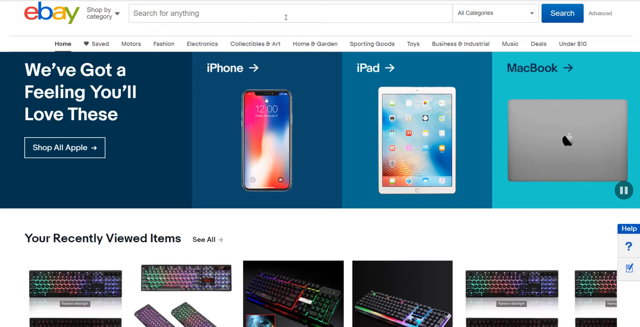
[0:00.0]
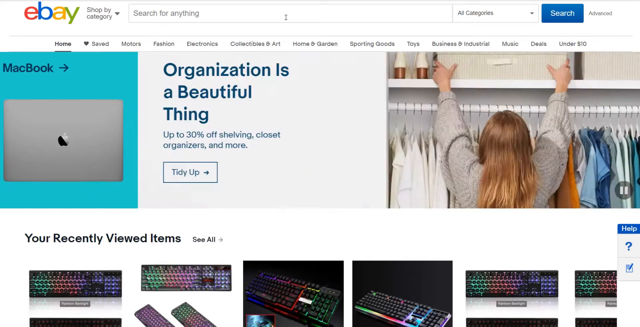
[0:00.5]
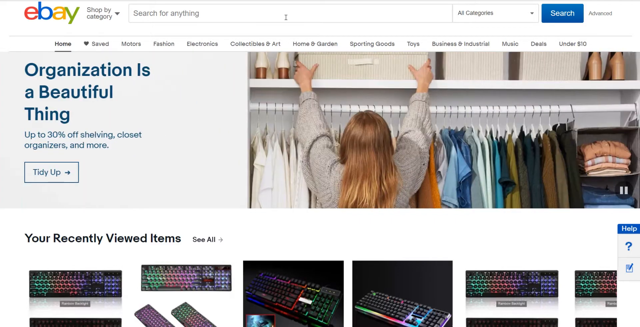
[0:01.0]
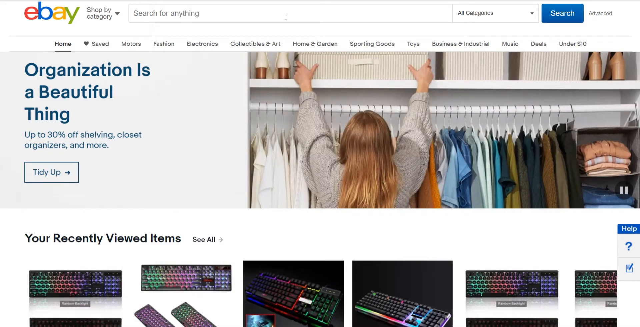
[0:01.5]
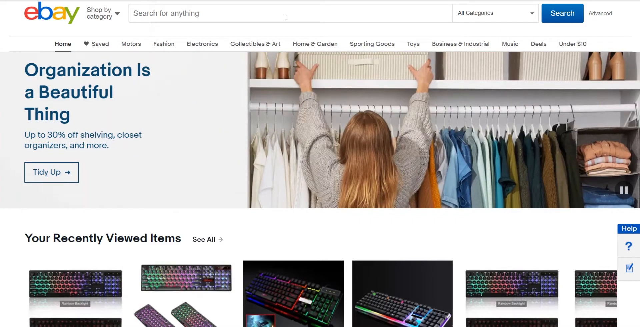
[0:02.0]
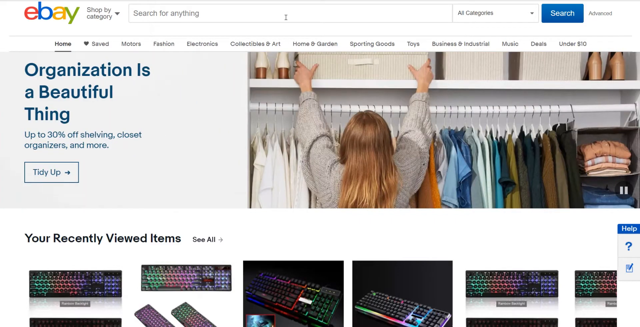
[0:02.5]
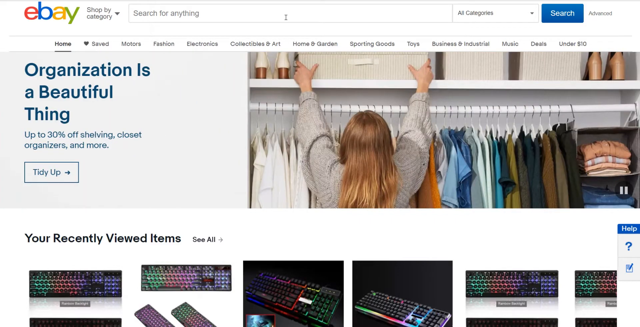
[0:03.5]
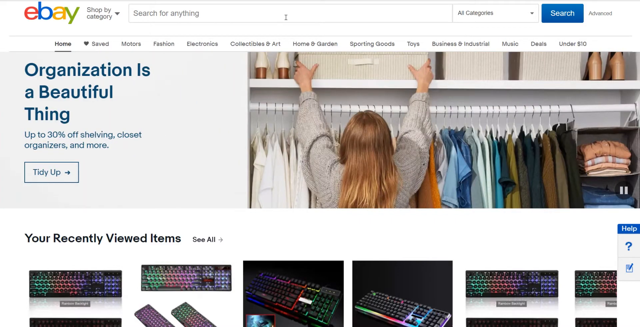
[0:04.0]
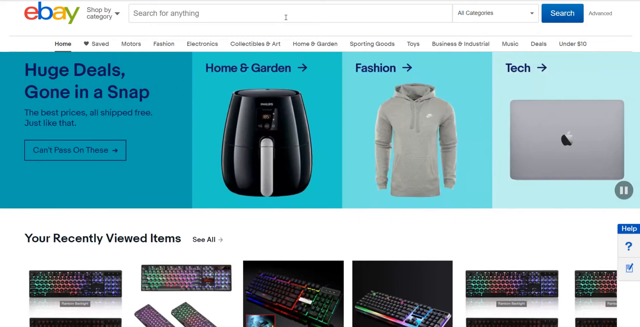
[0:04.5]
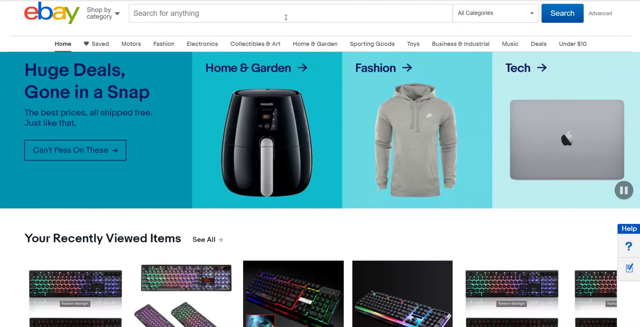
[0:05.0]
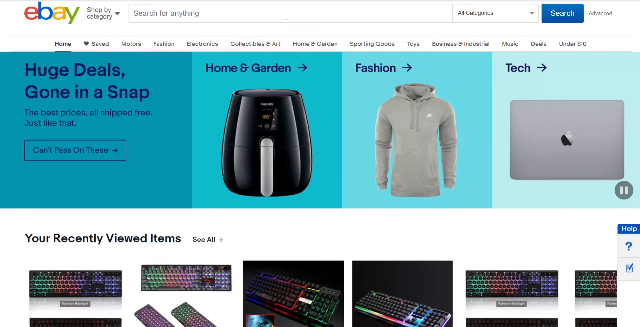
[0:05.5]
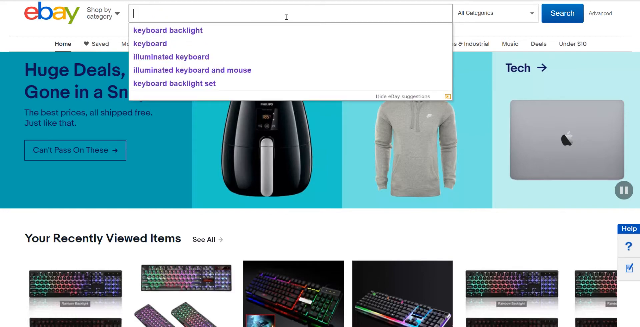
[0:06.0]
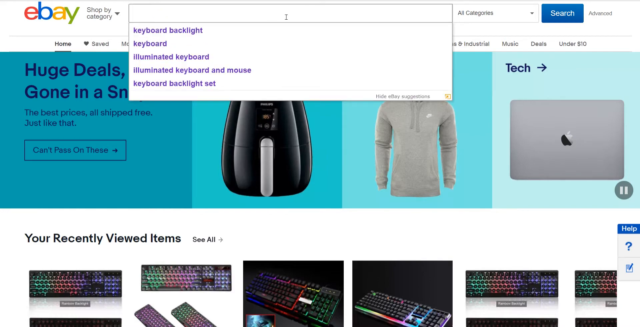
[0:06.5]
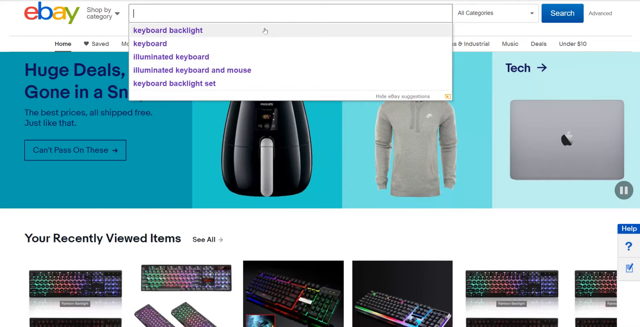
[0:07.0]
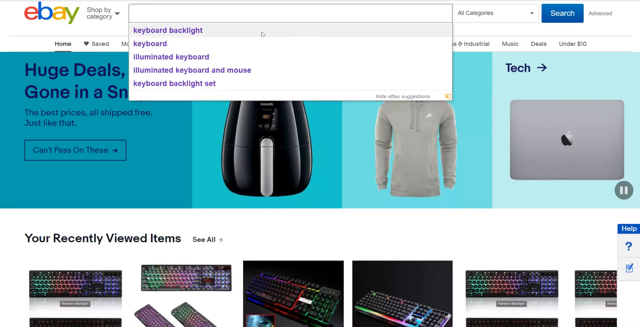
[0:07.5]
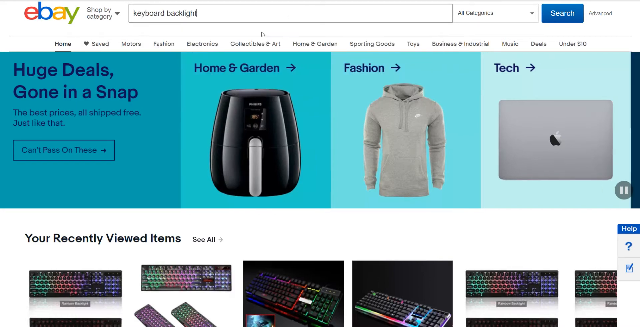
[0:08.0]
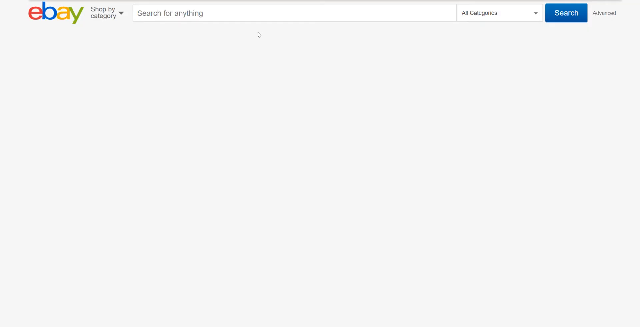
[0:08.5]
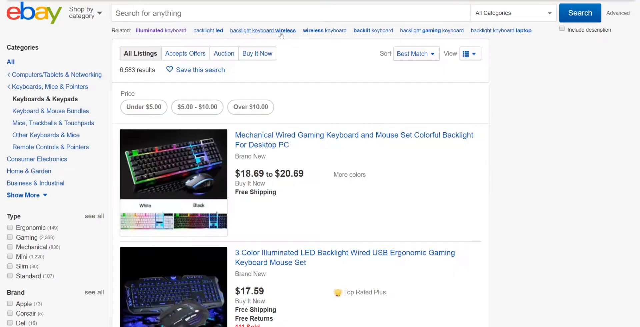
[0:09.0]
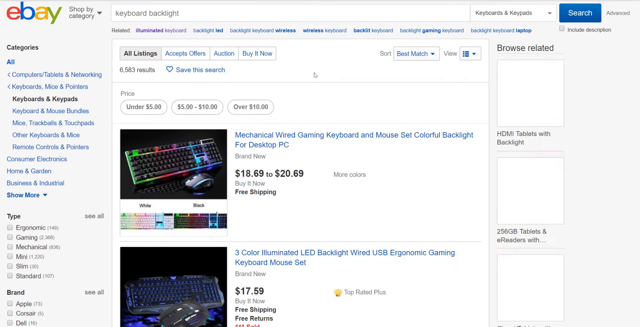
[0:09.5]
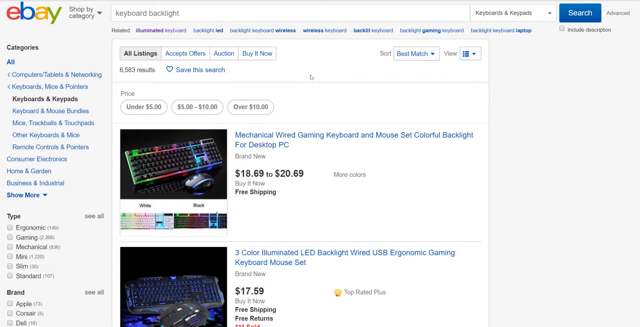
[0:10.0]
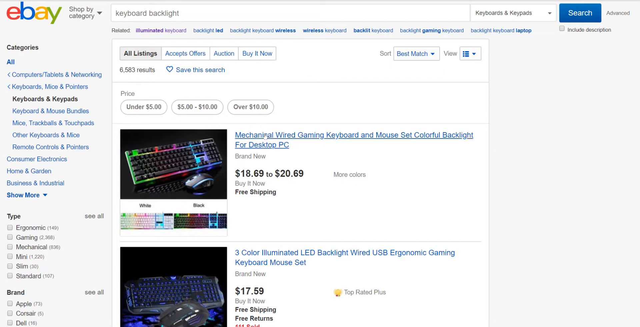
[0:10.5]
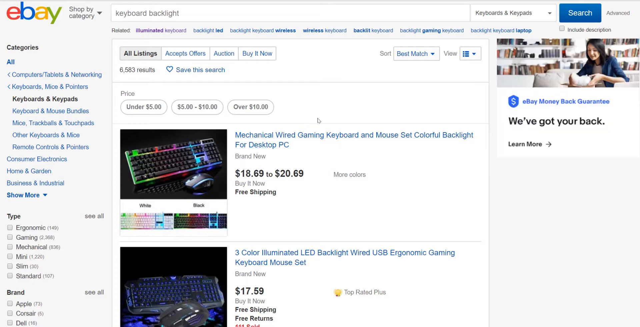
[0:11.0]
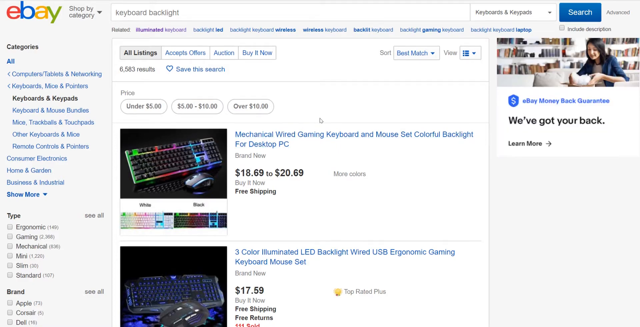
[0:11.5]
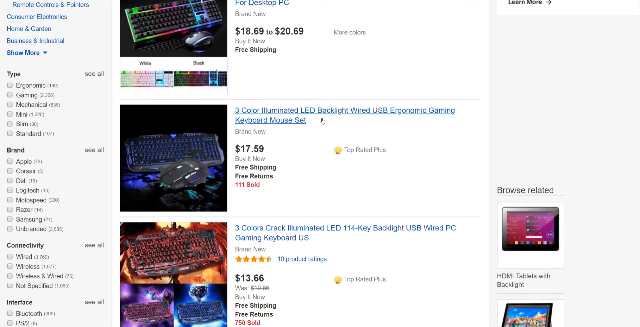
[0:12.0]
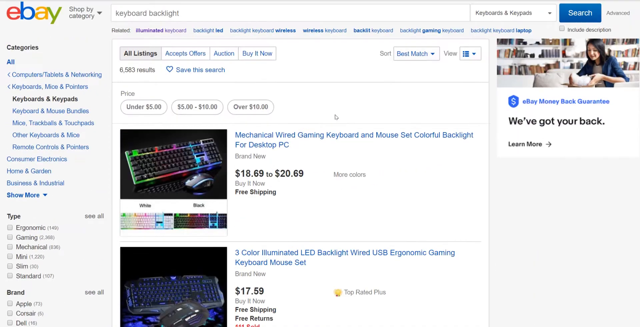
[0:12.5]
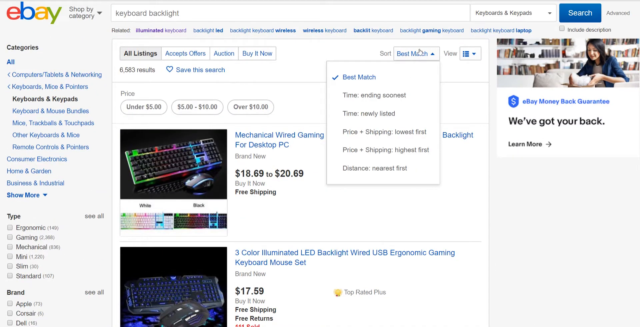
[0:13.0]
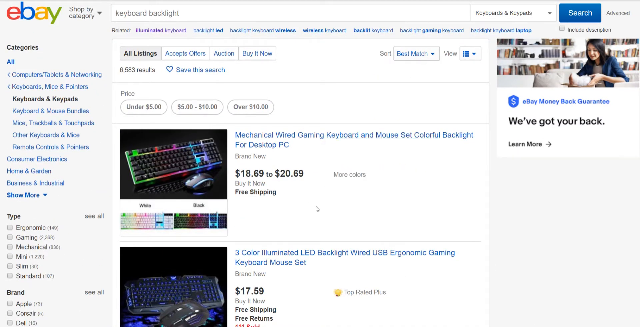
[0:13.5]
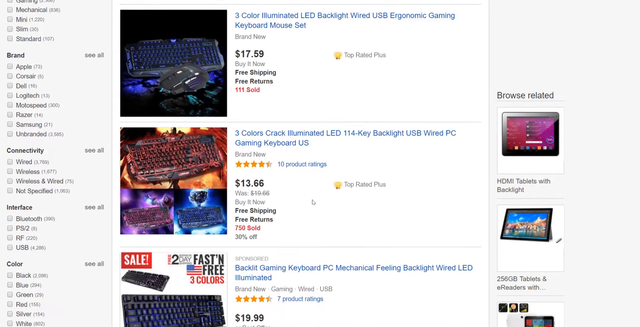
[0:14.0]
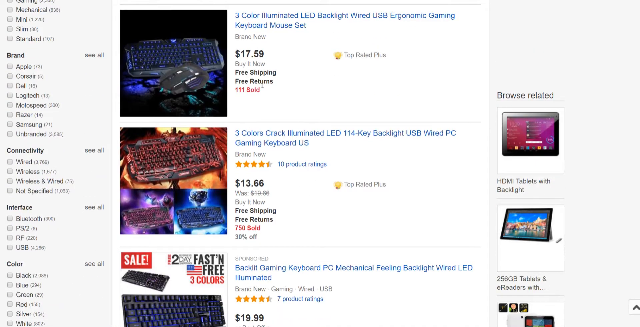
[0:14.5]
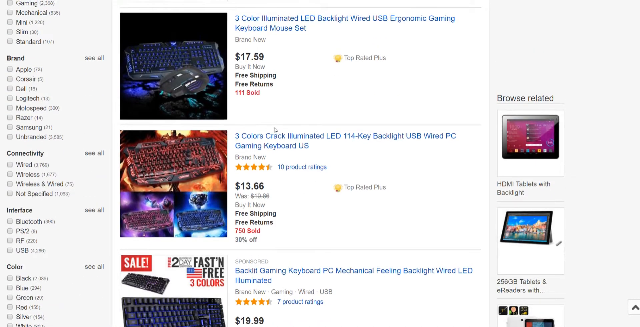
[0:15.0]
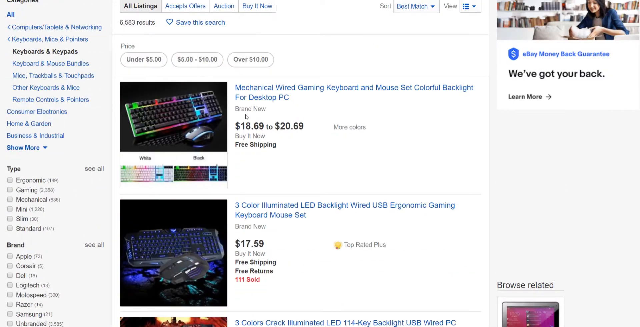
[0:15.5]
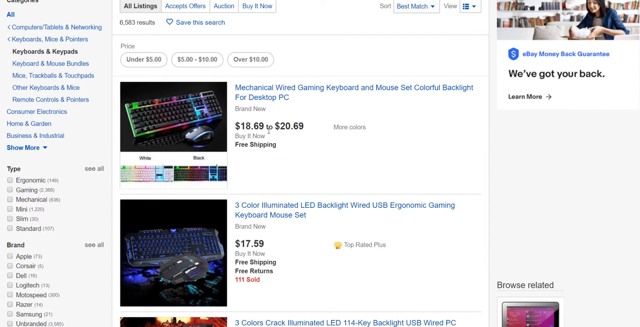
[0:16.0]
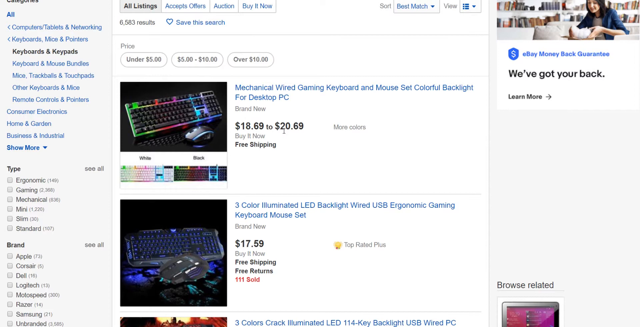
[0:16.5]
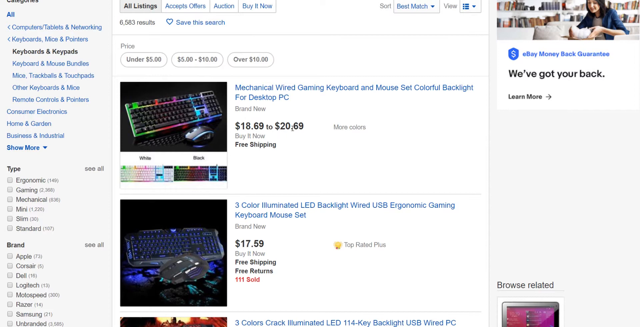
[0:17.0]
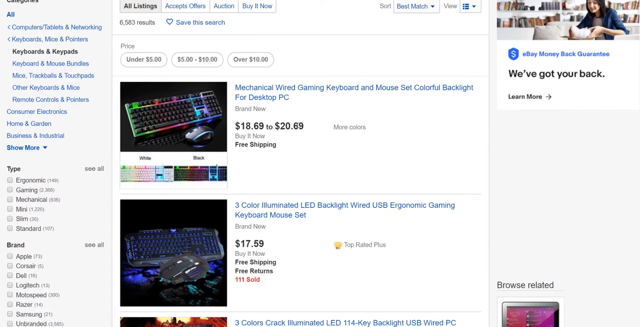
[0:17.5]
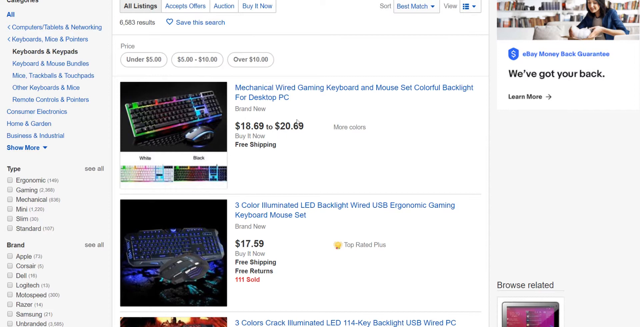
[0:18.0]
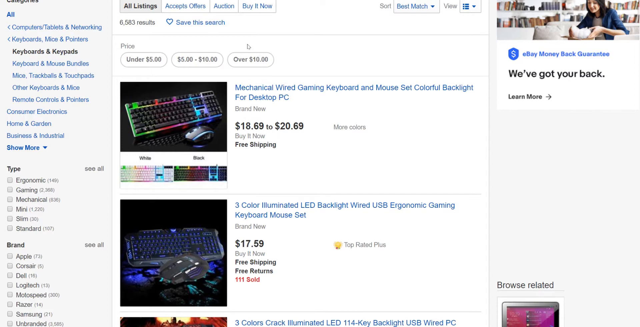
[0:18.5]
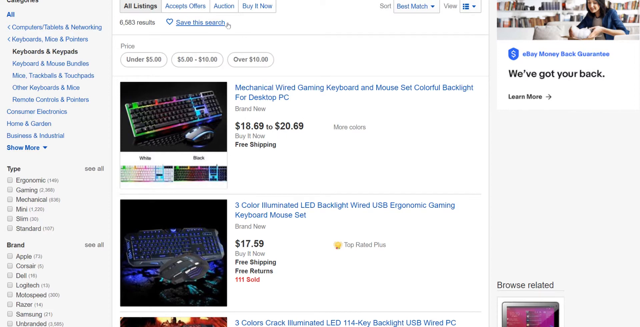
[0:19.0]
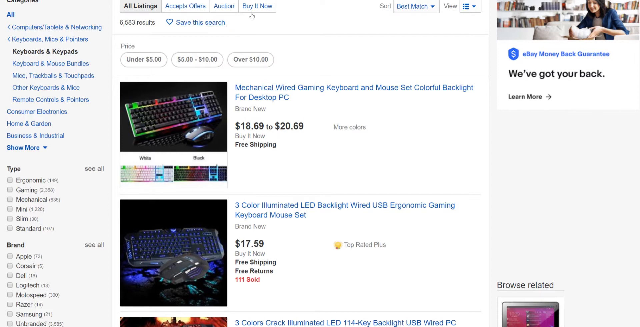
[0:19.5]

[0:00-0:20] The video opens on the eBay website. On the left-hand side is the text "we've got a feeling you'll love these," followed by iPhone with an arrow pointing right, iPad with another arrow, and then MacBook. Underneath these are pictures, with "organizers and more" and a picture of a woman grabbing a container off a shelf. Underneath that, the page says "your recently viewed items." The banner then swipes to a screen reading "huge deals gone in a snap. The best prices all ship free, just like that," followed by "we've got a feeling you'll love these," "shop all Apple" and iPhone. The page then refreshes to keyboard backlight results. The first listing is a "mechanical wired gaming keyboard and mouse set colorful backlight for desktop PC brand new." The person scrolls down a little and back up before showing that listing's price, which reads "$18.69 to $20.69," and then goes to buy it now.